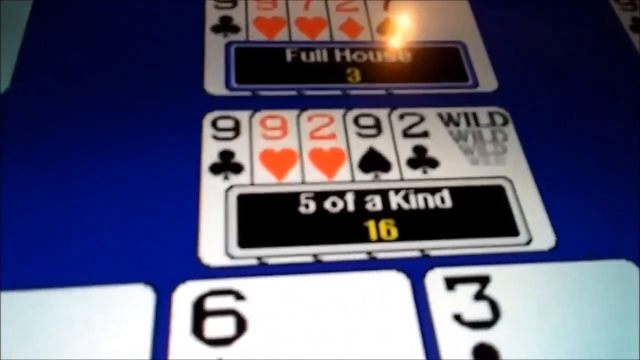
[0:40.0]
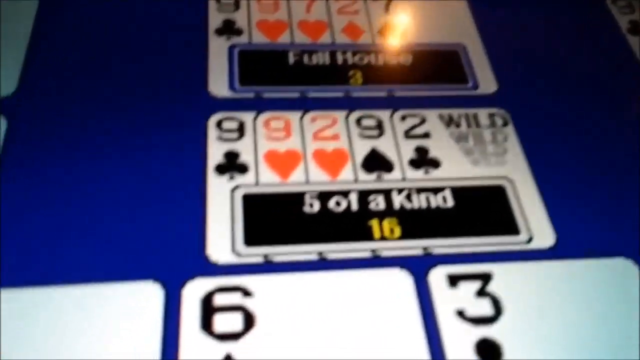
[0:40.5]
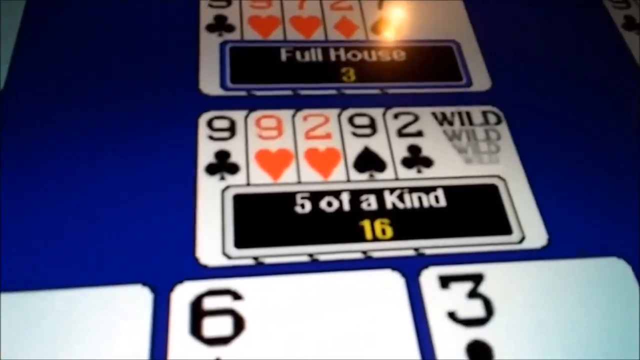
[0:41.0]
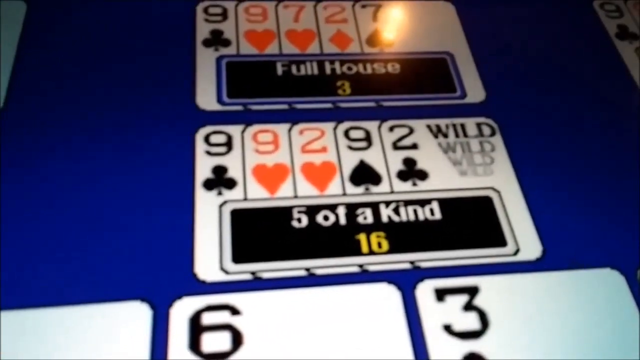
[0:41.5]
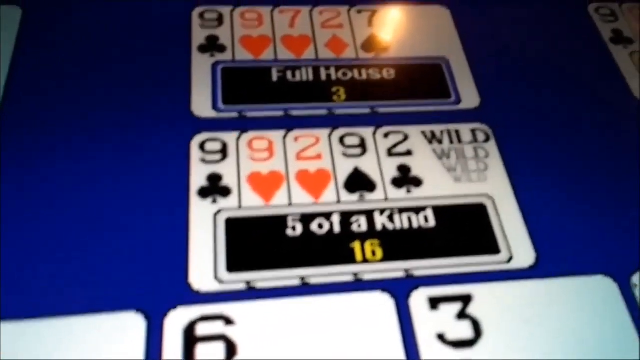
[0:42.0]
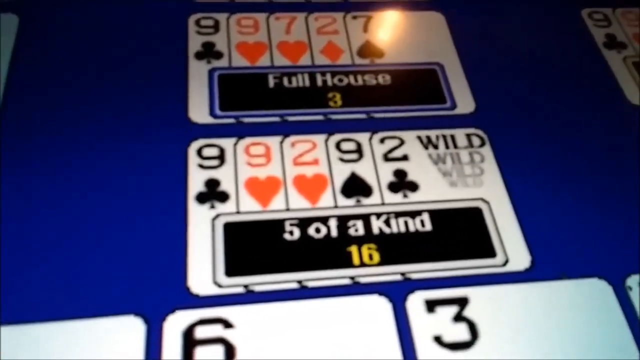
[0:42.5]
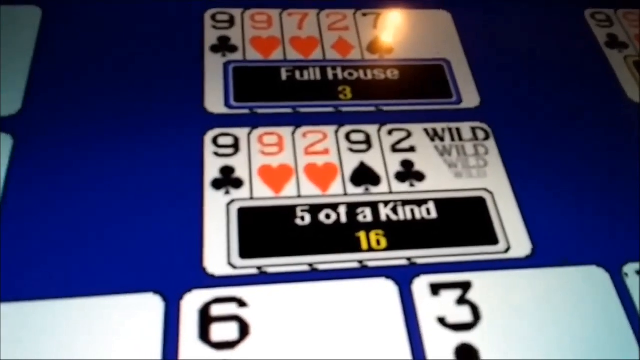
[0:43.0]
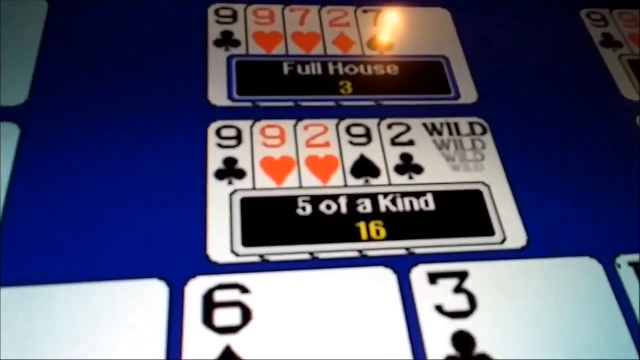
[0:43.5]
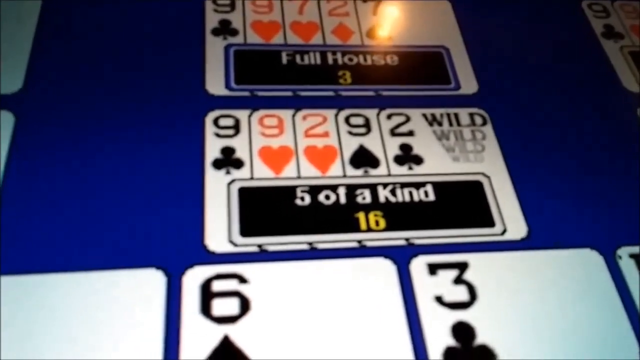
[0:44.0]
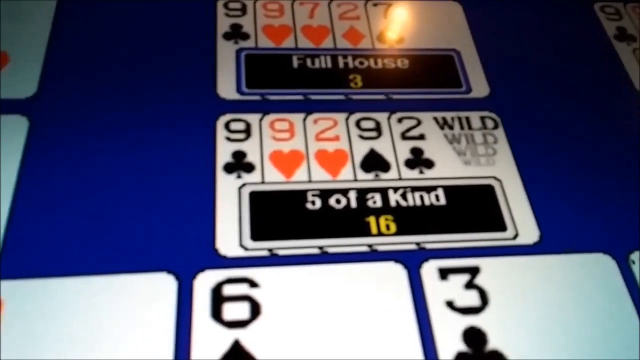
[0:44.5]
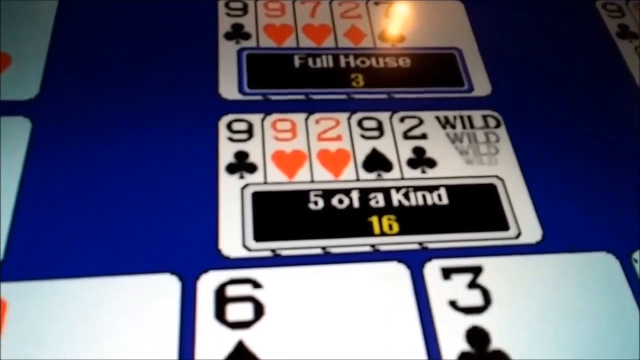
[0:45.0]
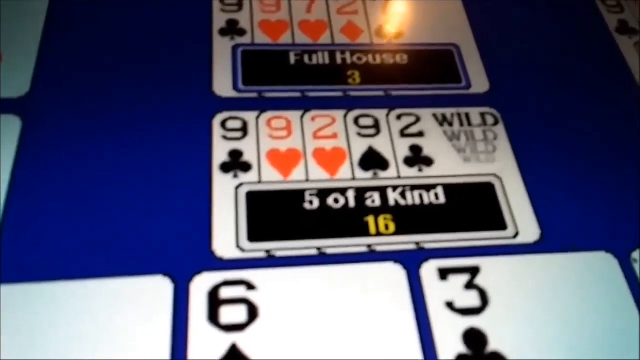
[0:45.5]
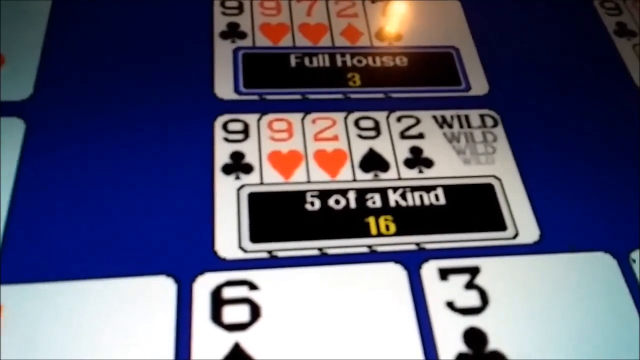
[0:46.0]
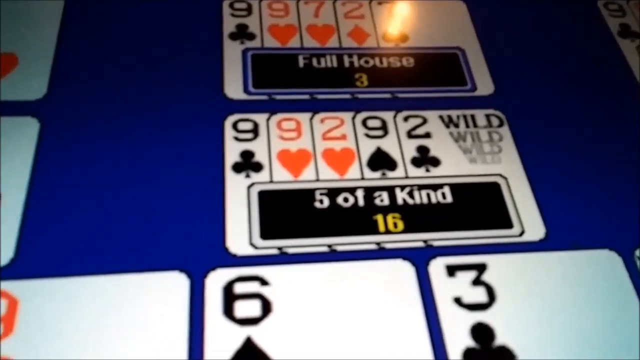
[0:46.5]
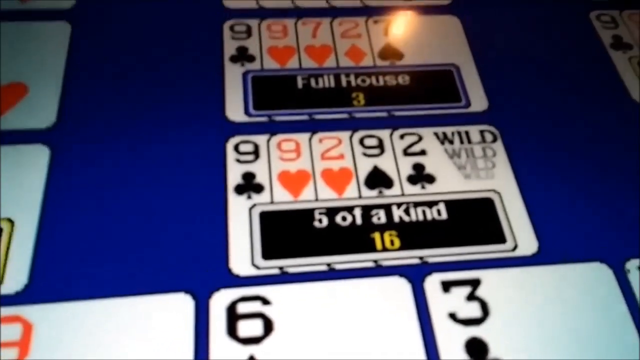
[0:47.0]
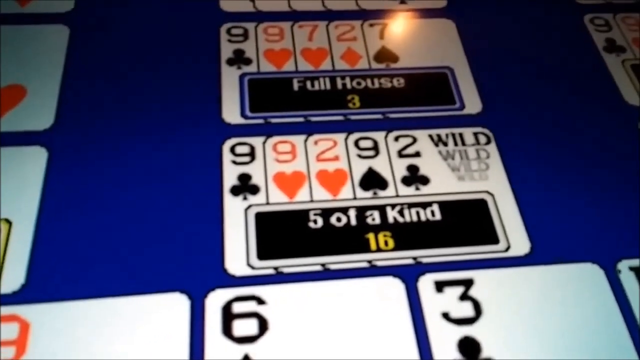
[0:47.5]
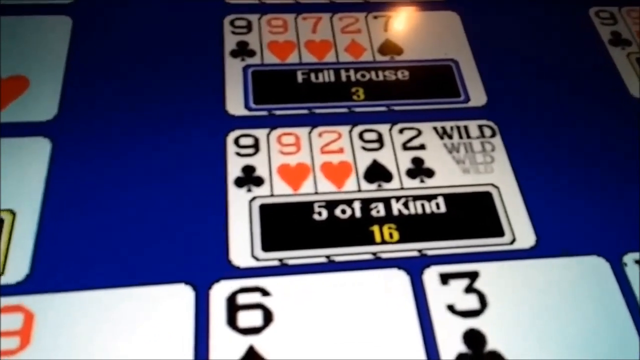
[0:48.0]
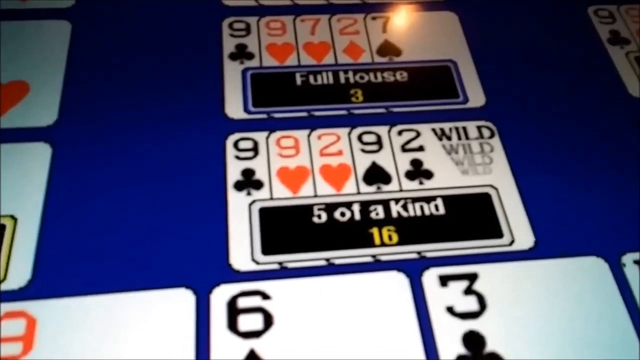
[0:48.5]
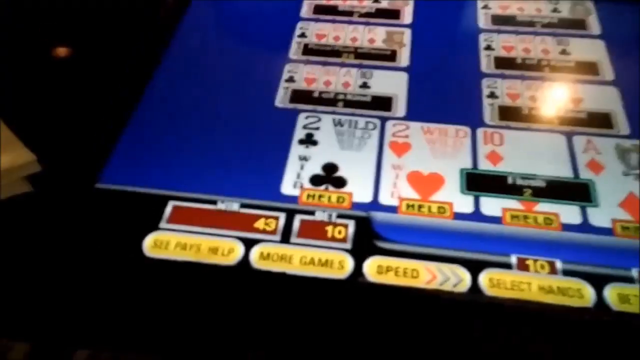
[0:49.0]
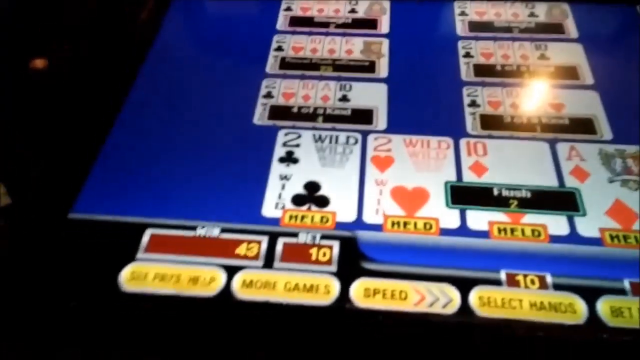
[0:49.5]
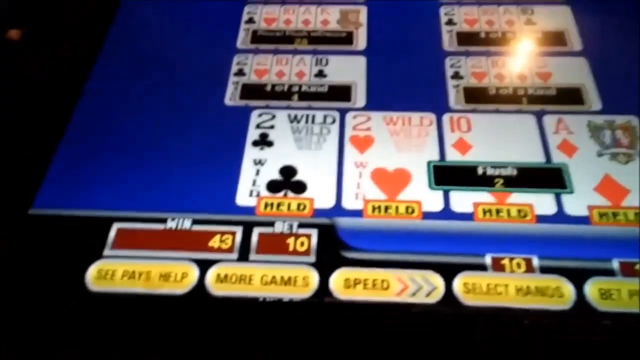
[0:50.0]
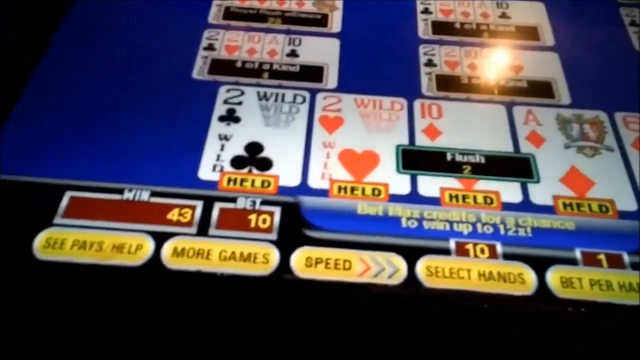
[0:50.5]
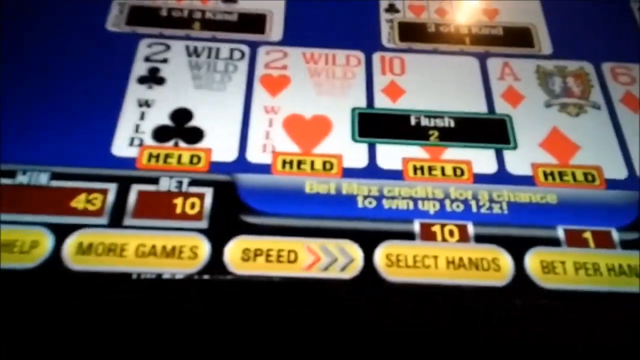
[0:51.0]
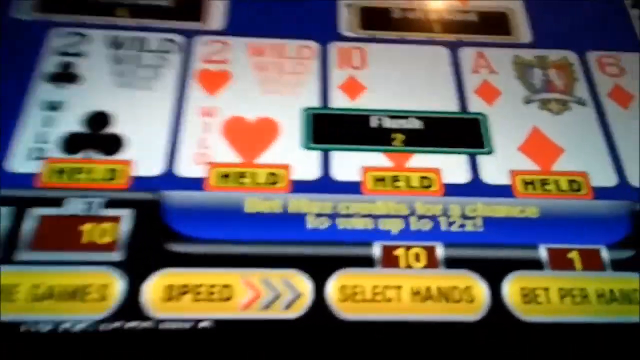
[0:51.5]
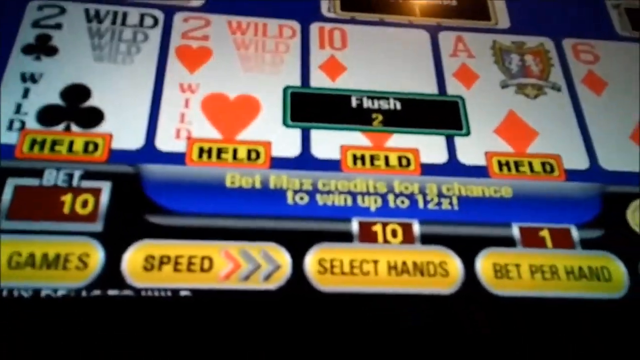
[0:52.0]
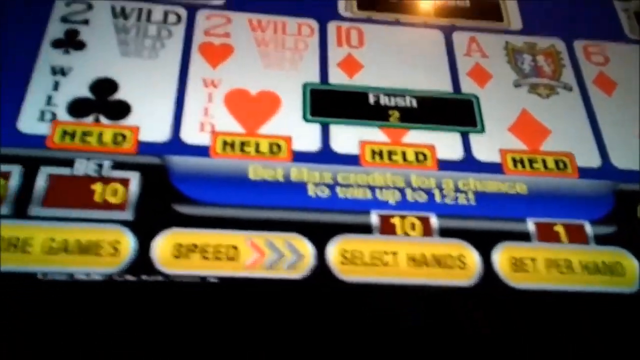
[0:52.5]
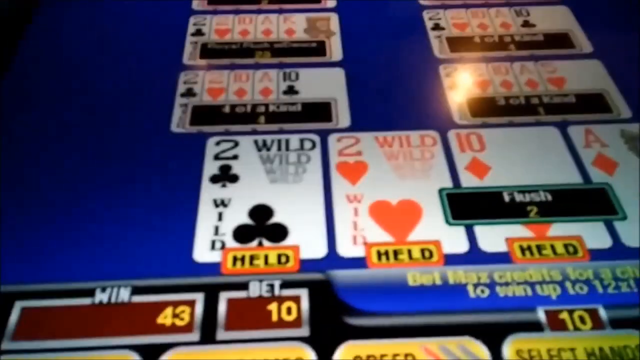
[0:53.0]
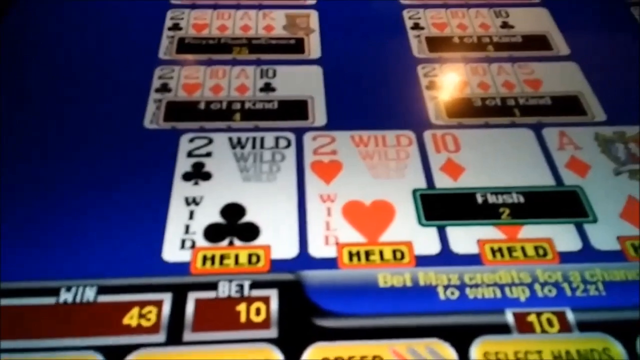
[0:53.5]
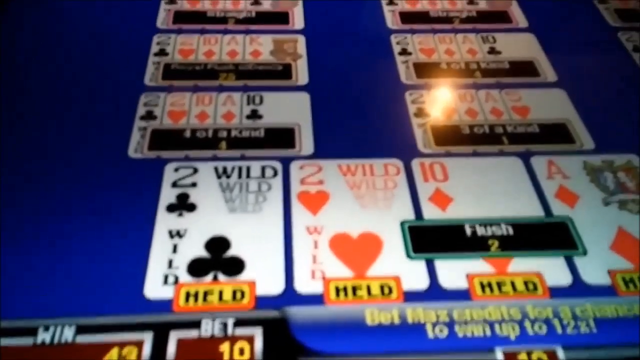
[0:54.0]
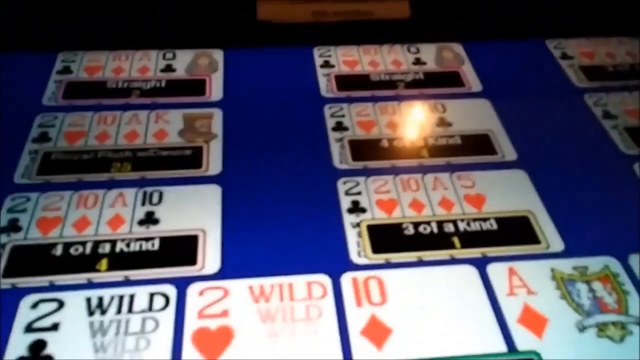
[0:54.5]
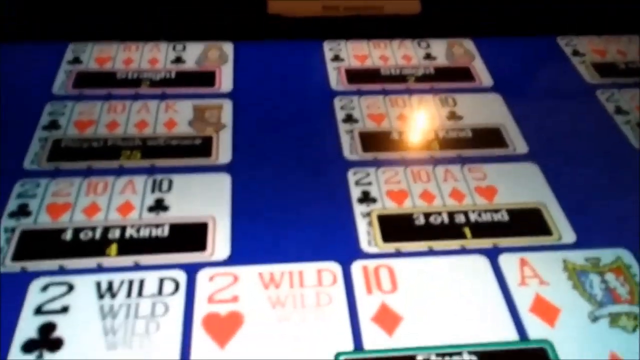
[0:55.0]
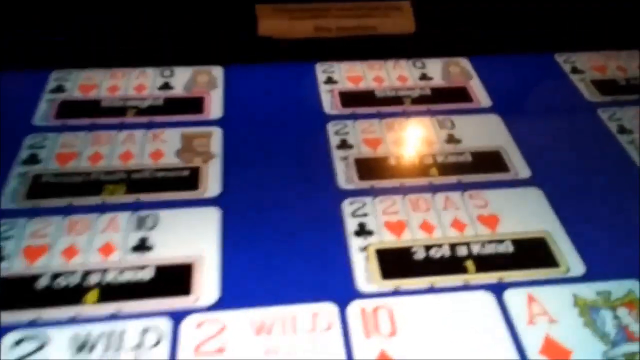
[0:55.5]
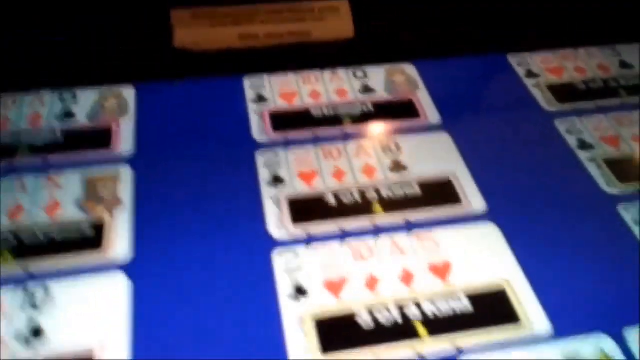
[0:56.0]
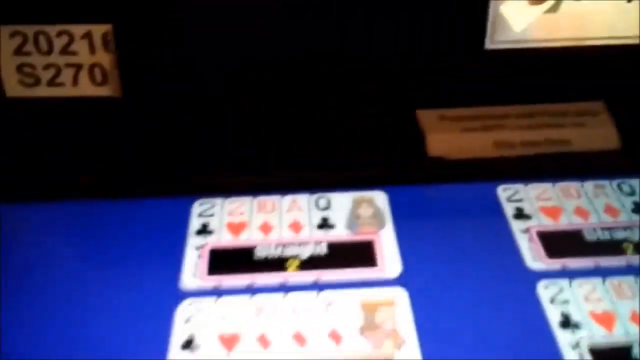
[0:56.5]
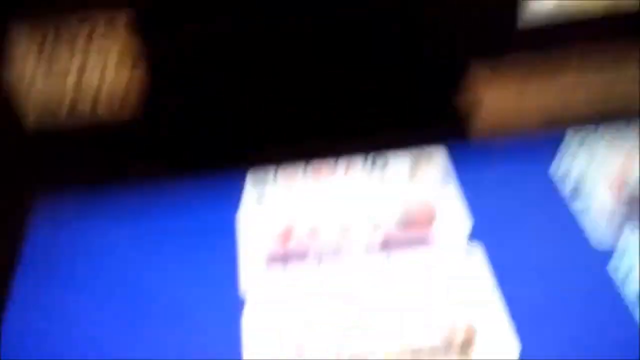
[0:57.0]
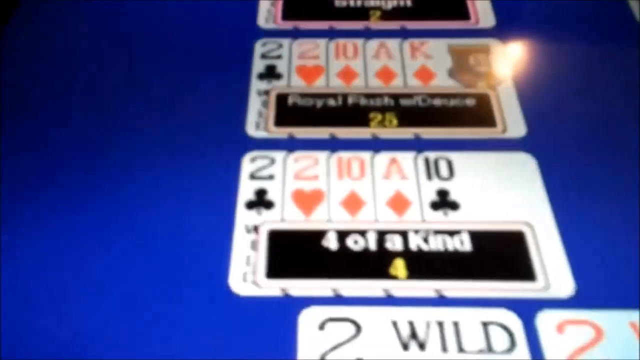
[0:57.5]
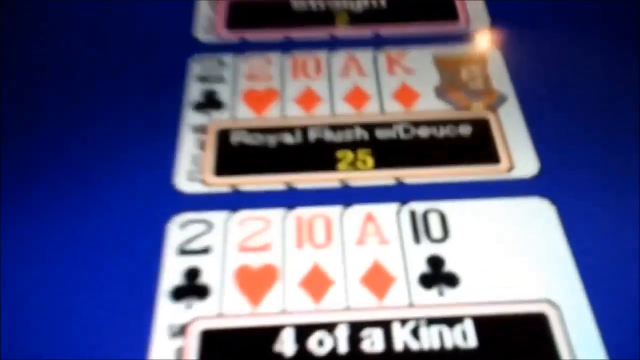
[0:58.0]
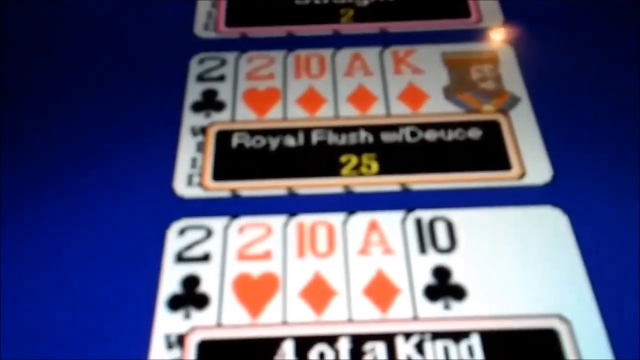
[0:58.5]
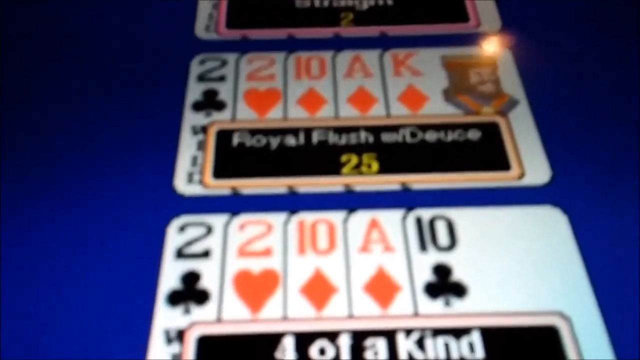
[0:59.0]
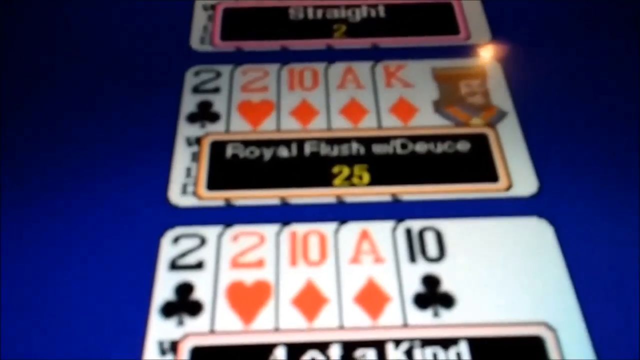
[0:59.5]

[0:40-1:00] The camera is zoomed in on the "five of a kind" hand, with the number 16 underneath; its cards are the nine of clubs, nine of hearts, two of hearts, nine of spades and the two of clubs marked "wild". Above it is a hand labeled "full house": the nine of clubs, nine of hearts, seven of hearts, two of diamonds and seven of spades, with the two apparently wild. The camera seems to move around as though the person is talking, then zooms back out or cuts to a different hand of the player's: the two of clubs marked wild, the two of hearts marked wild, the ten of diamonds and the ace of diamonds, all held, and the six of diamonds, not held. In the middle of the screen it says "flush 2". Some of the other hands are visible, and the camera zooms in on one labeled "royal flush with deuce 25": the two of clubs, two of hearts, ten of diamonds, ace of diamonds and king of diamonds.